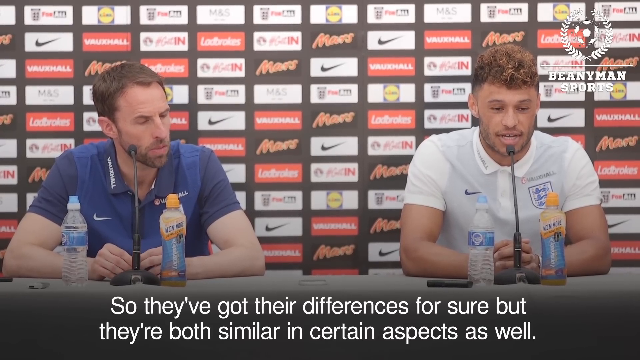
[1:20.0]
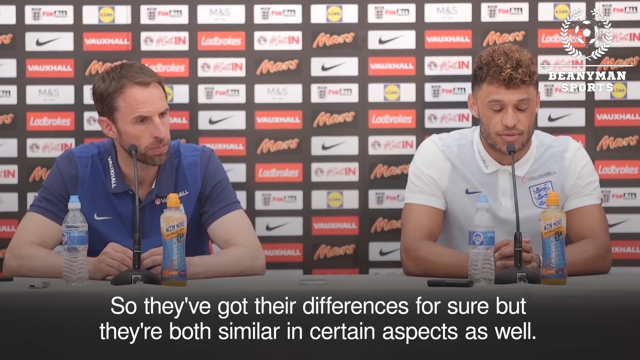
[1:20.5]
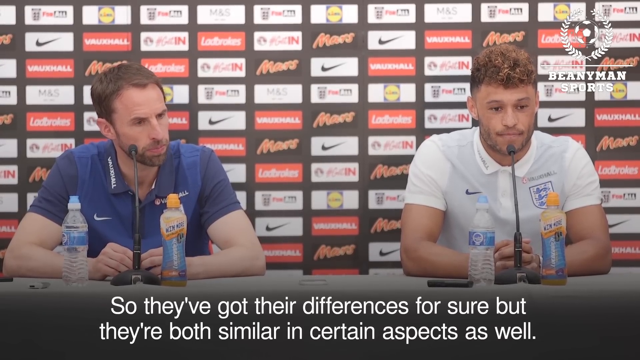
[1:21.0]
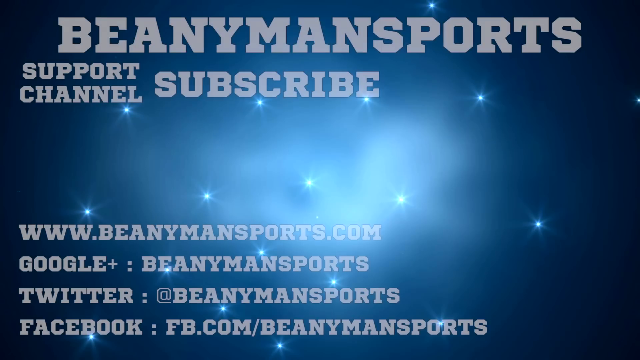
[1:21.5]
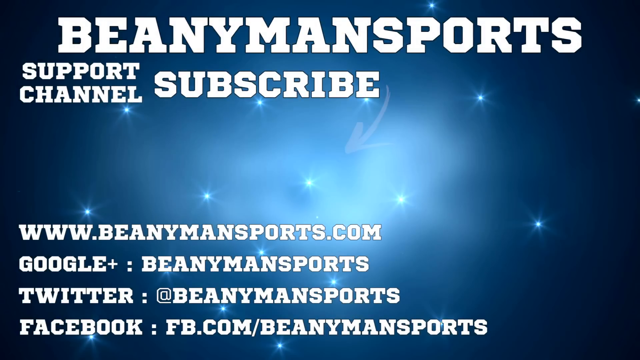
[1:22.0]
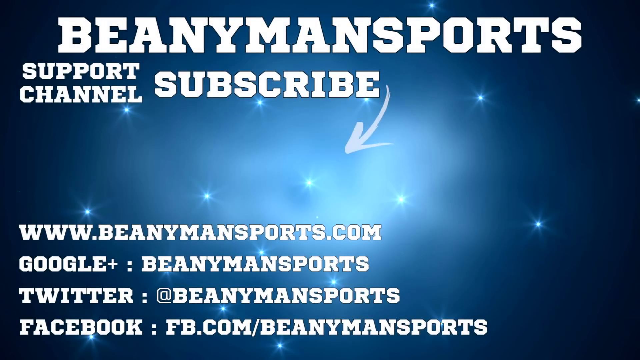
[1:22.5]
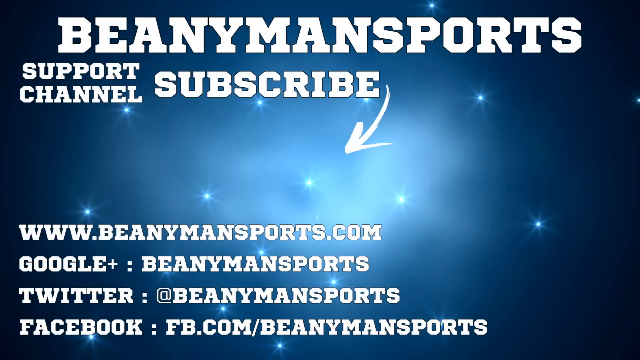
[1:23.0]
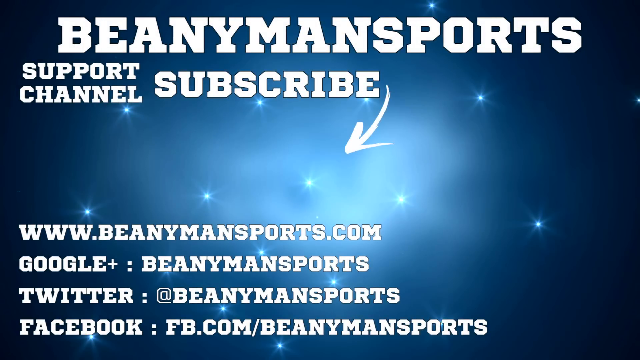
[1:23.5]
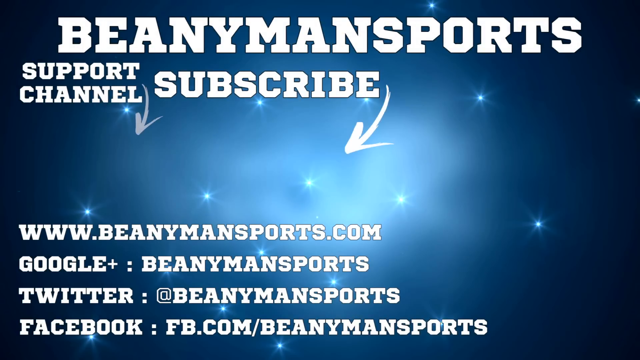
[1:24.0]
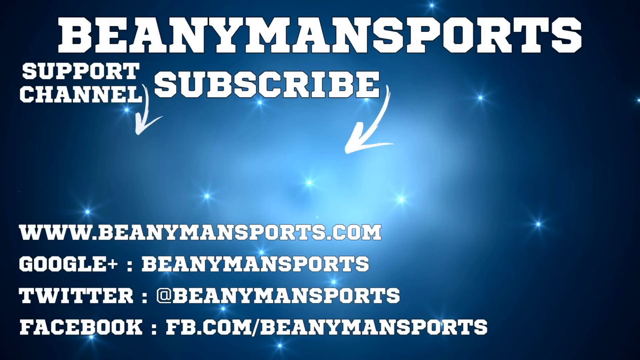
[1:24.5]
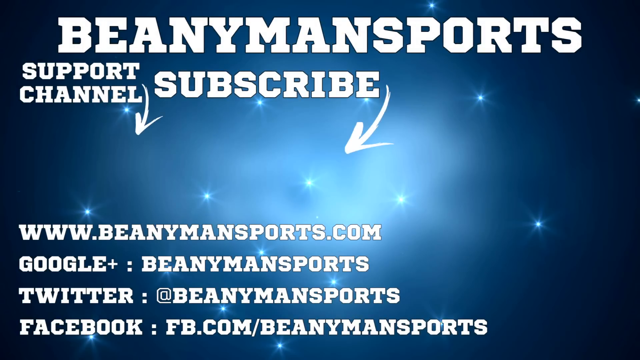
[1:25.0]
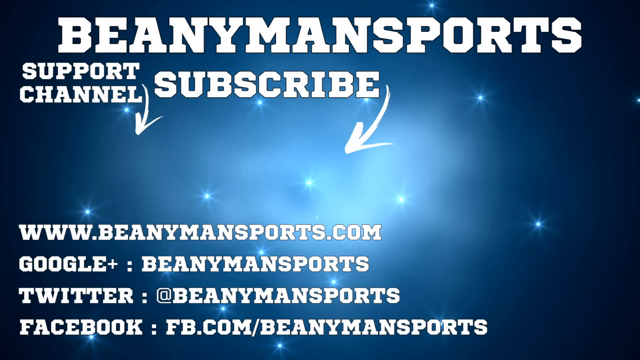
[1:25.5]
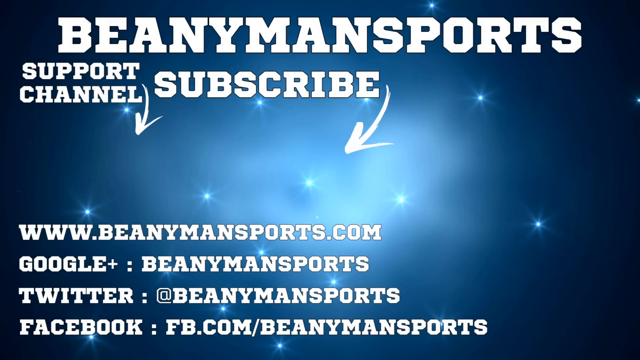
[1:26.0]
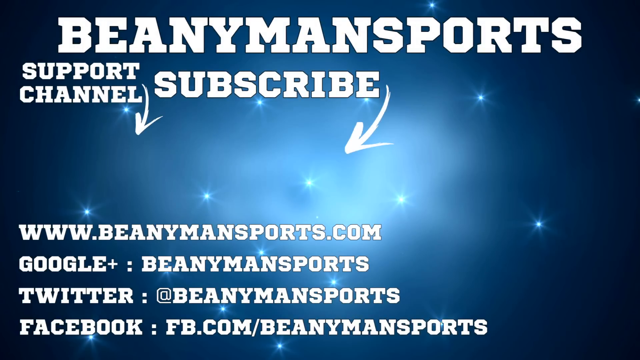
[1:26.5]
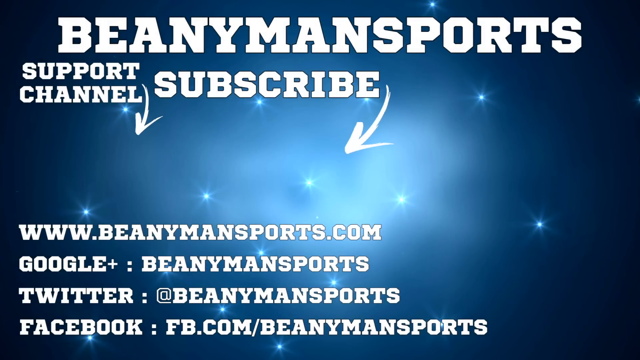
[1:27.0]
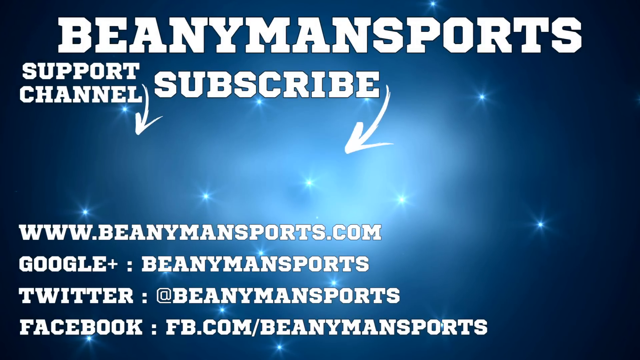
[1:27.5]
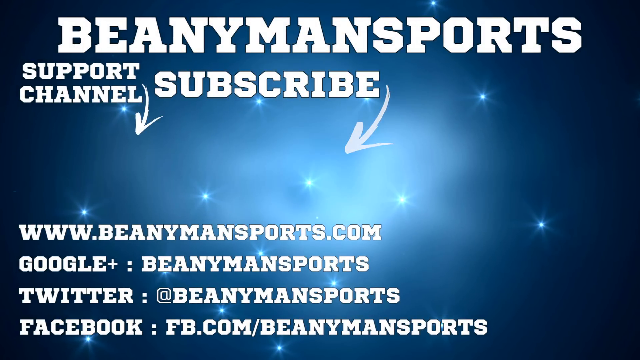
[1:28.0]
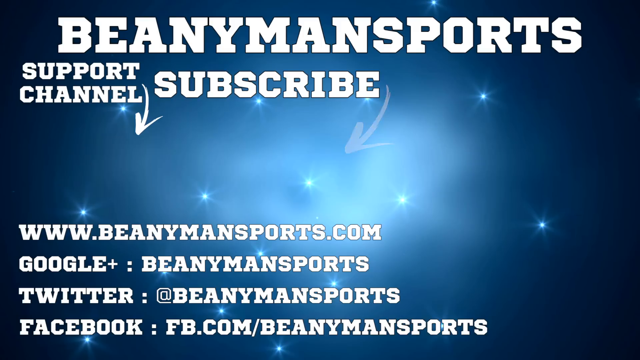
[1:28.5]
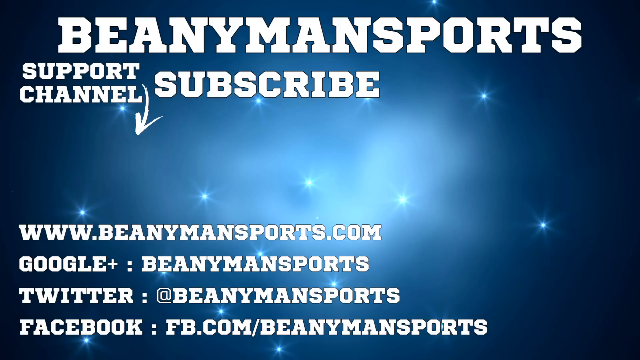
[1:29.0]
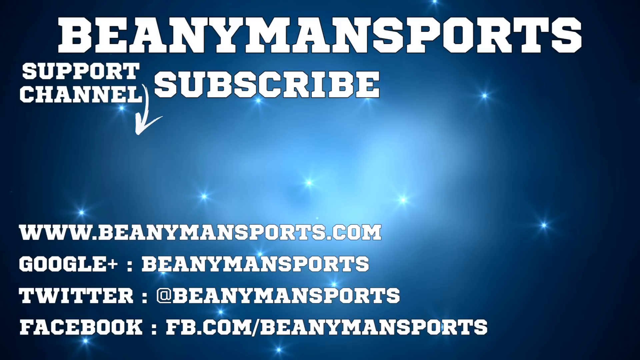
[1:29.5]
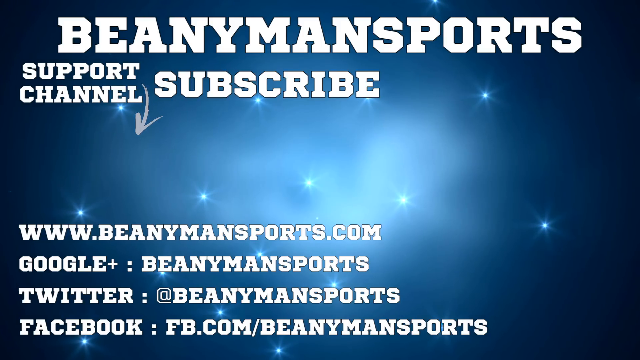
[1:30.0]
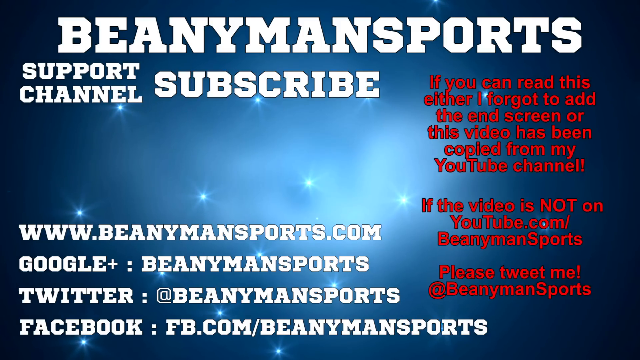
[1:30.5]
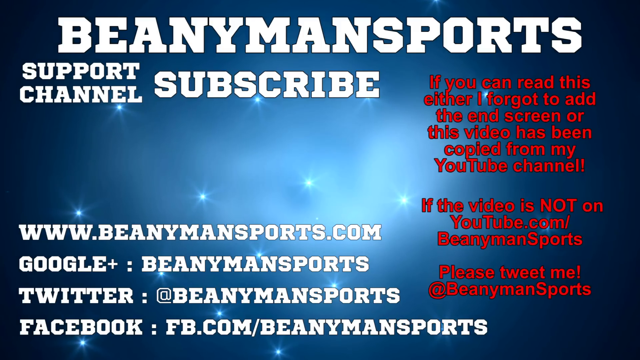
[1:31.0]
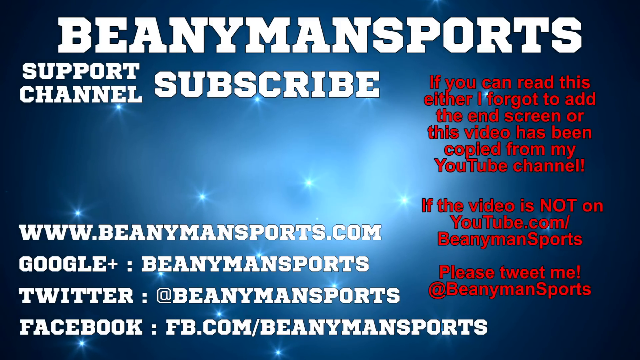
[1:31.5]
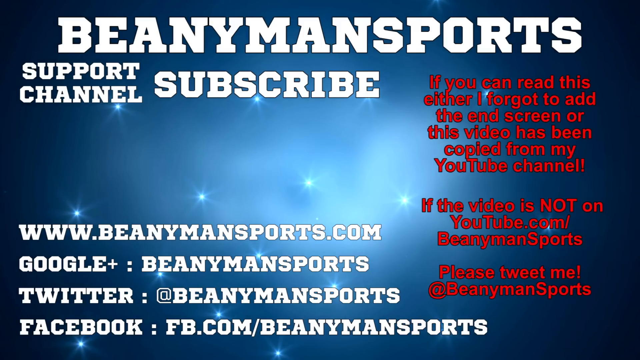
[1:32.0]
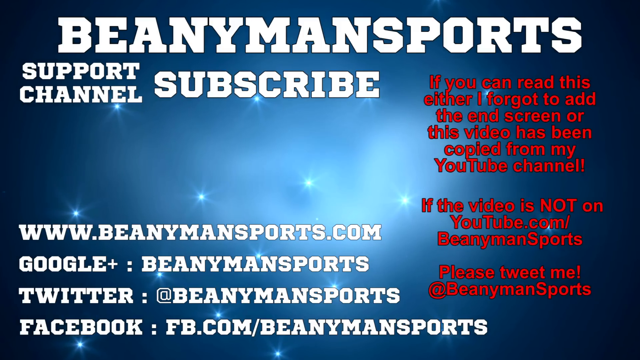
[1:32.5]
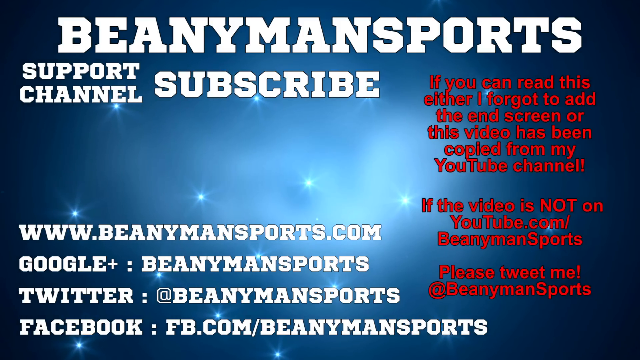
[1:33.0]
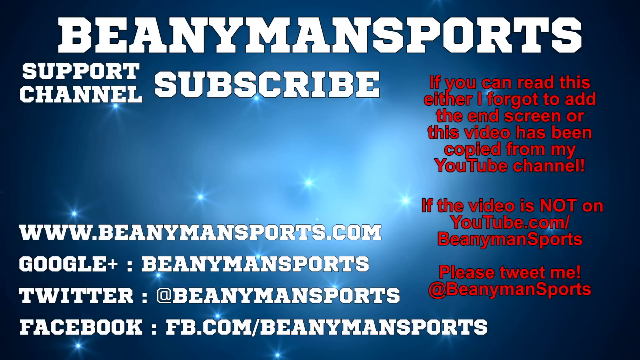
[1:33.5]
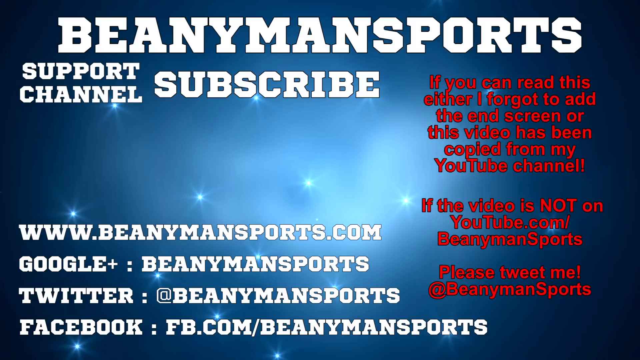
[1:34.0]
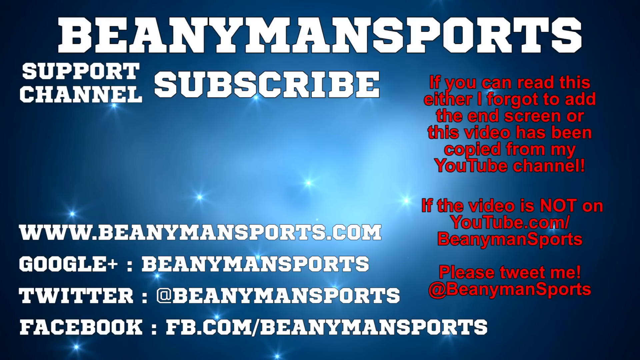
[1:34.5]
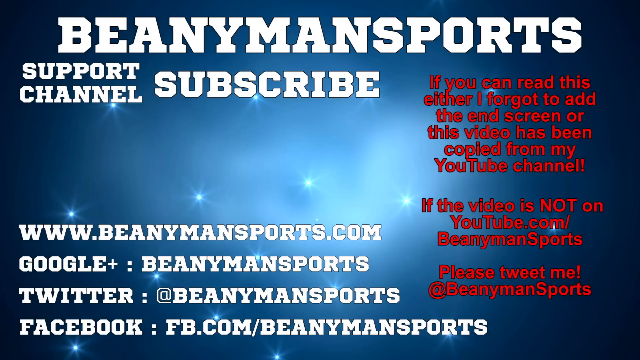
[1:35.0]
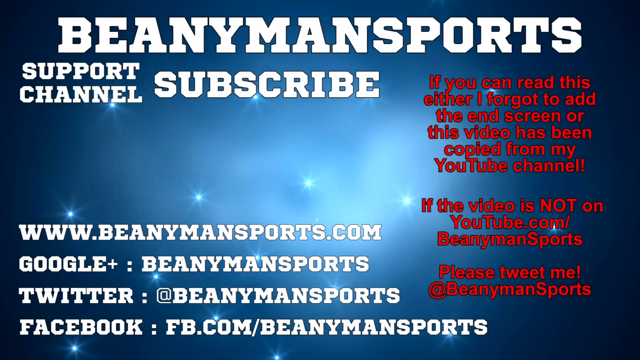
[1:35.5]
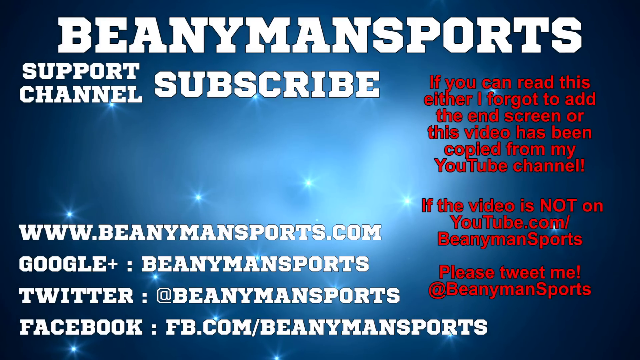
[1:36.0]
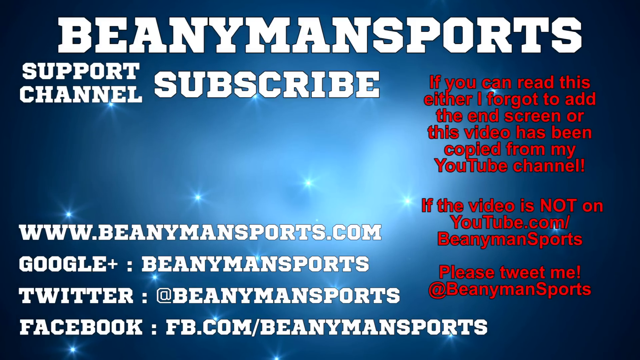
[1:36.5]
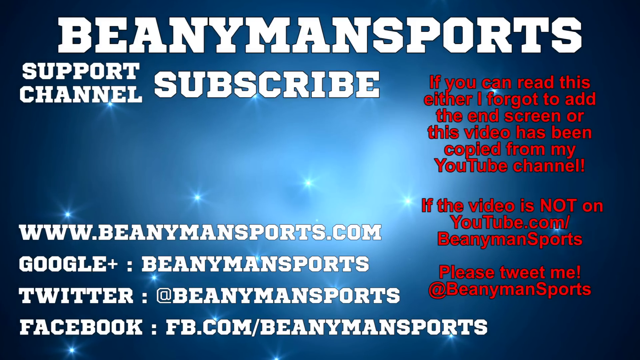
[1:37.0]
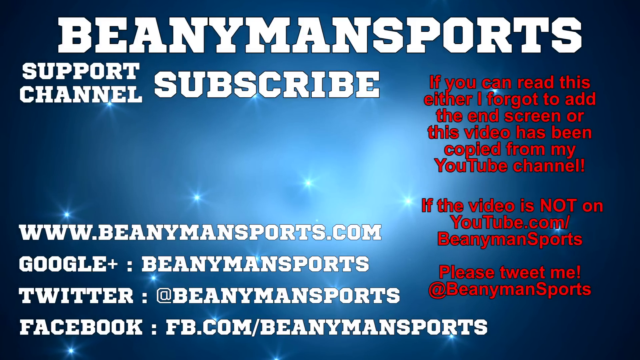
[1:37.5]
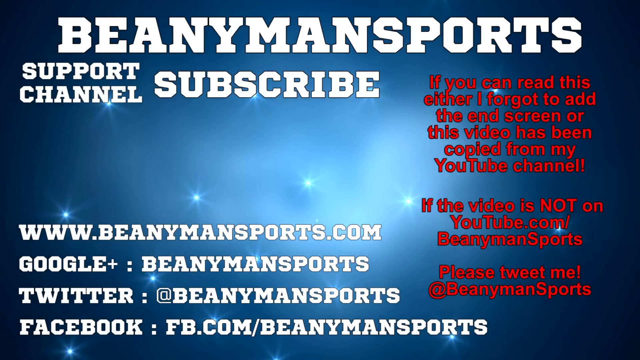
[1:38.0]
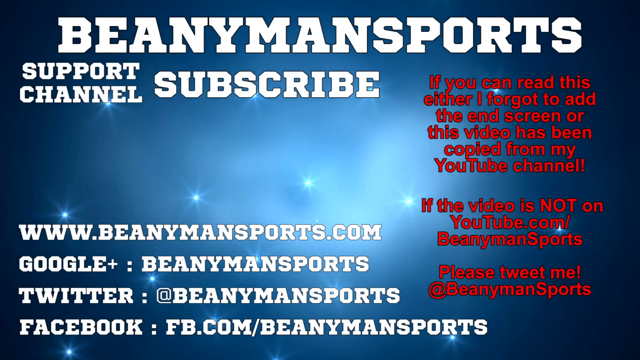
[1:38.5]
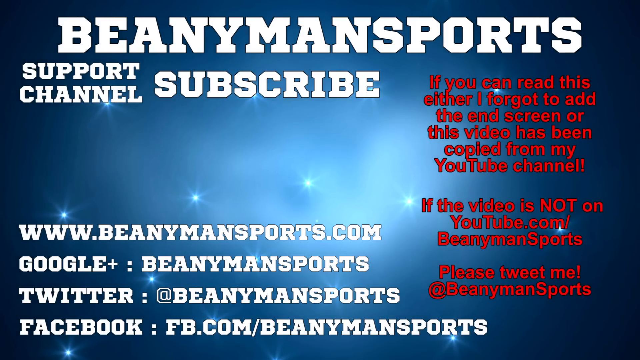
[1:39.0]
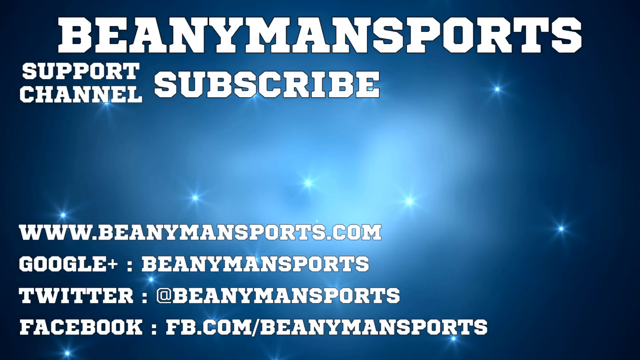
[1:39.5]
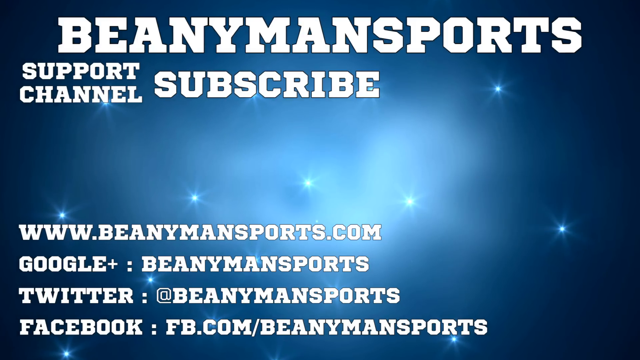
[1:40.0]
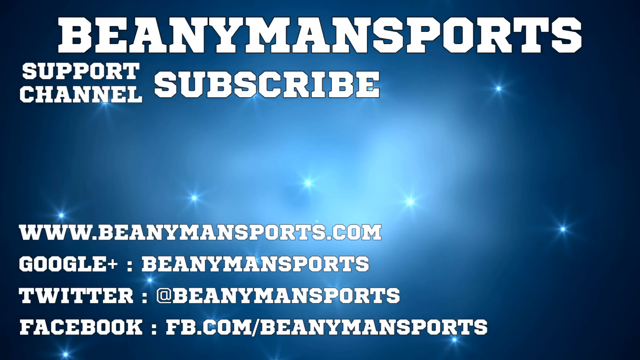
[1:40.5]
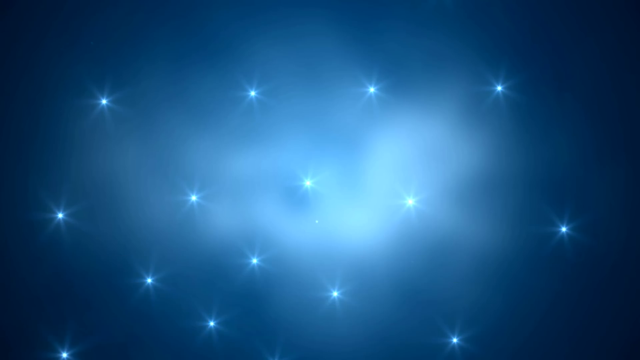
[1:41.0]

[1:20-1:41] The video moves from the player and his manager at the press conference to the closing credits. A screen says "Beany Man Sports" and "support channel and subscribe," and lists the website www.beanymansports.com, a Google Plus name, Beany Man Sports, a Twitter handle, Beany Man Sports, and Facebook at facebook.com/BeanyManSports. It also says, "if you have read this, either I forgot to add the end screen or this video has been copied from my YouTube channel."